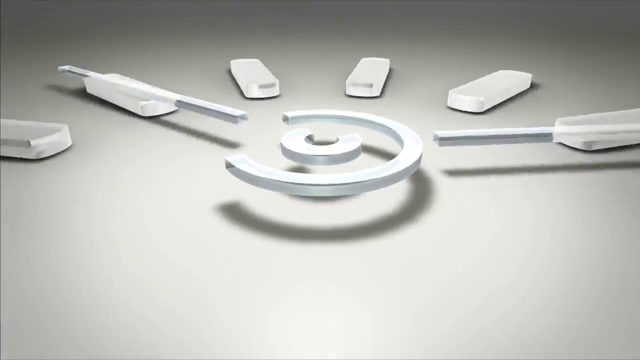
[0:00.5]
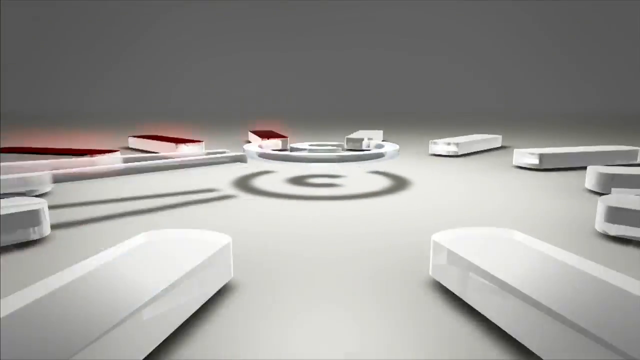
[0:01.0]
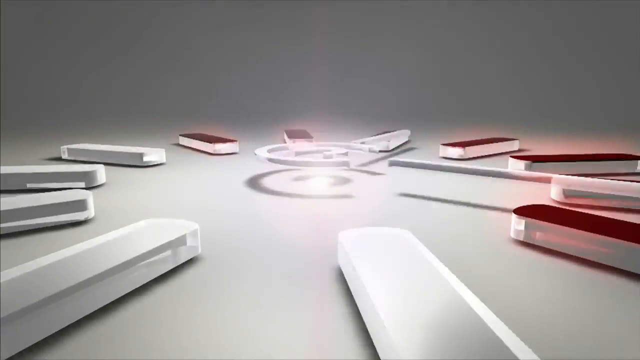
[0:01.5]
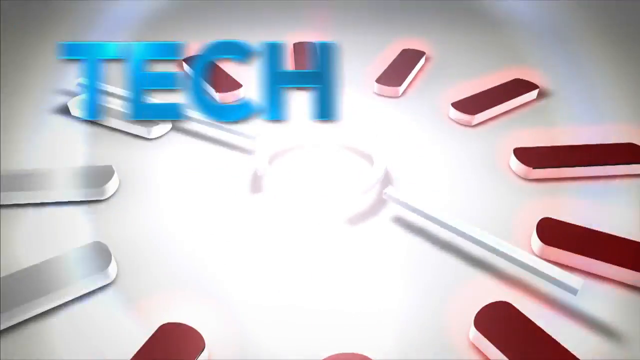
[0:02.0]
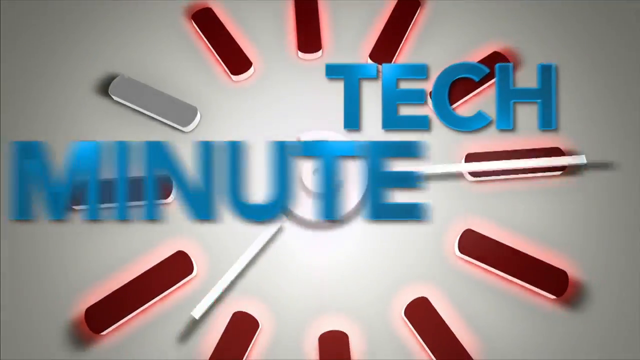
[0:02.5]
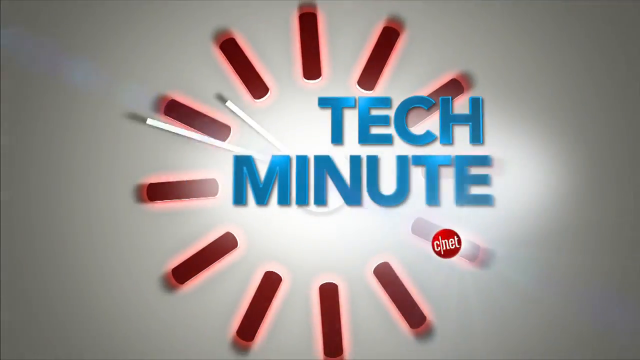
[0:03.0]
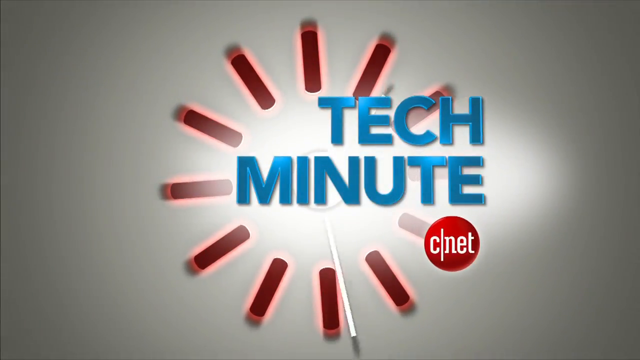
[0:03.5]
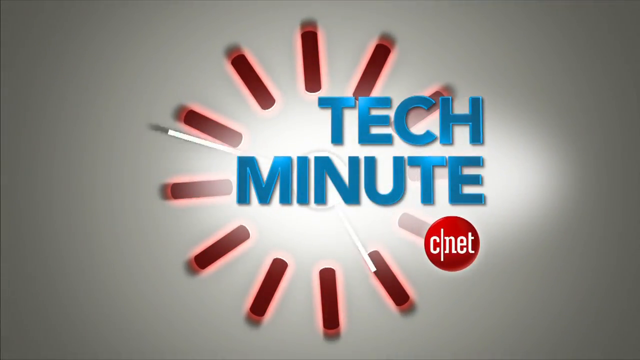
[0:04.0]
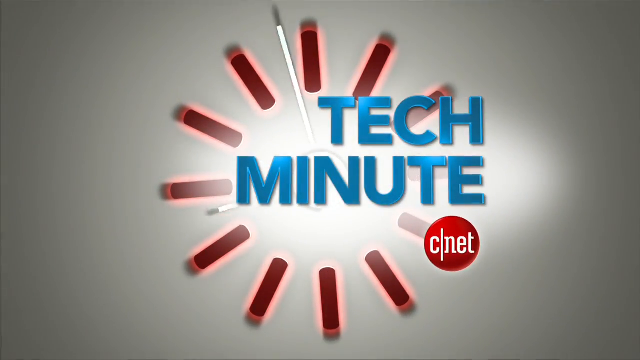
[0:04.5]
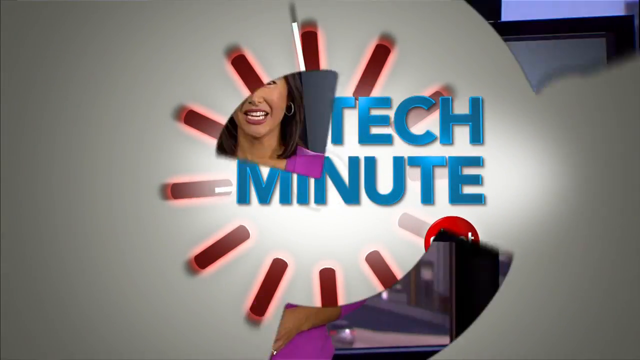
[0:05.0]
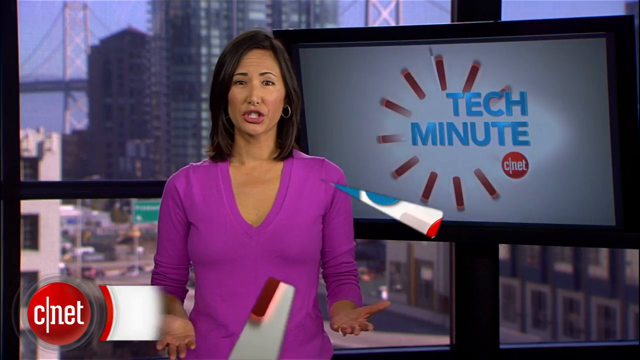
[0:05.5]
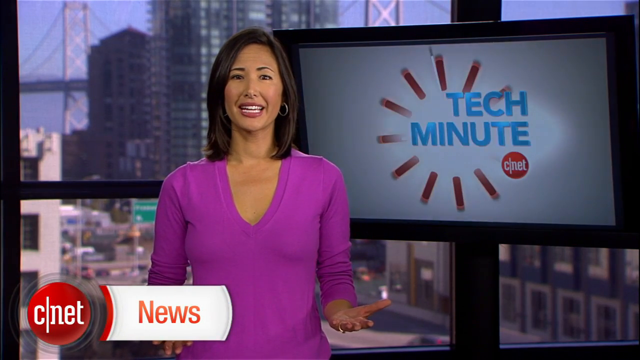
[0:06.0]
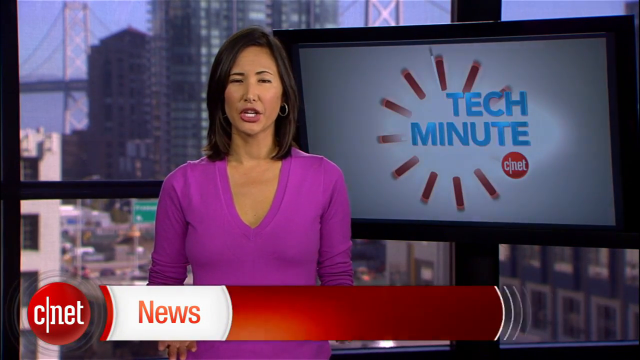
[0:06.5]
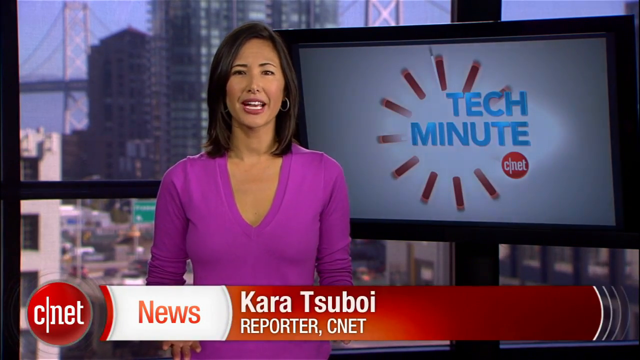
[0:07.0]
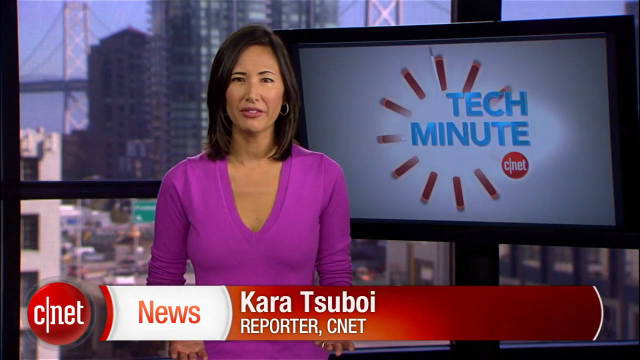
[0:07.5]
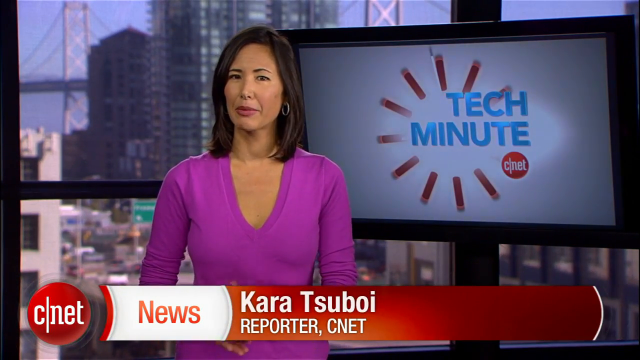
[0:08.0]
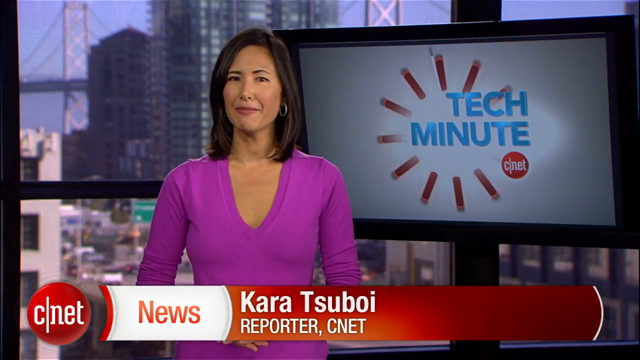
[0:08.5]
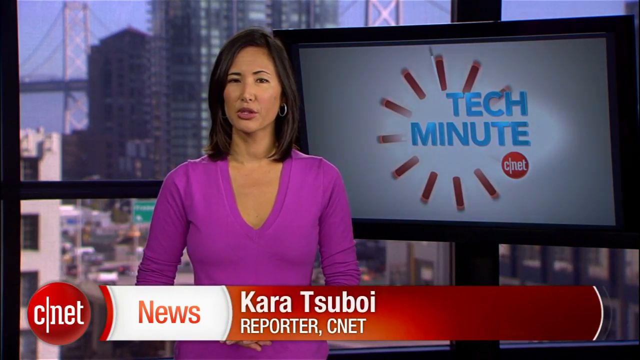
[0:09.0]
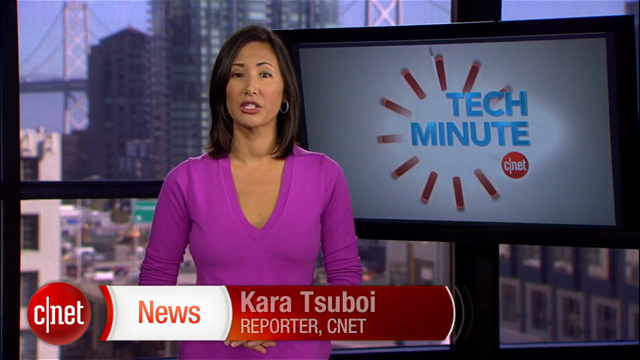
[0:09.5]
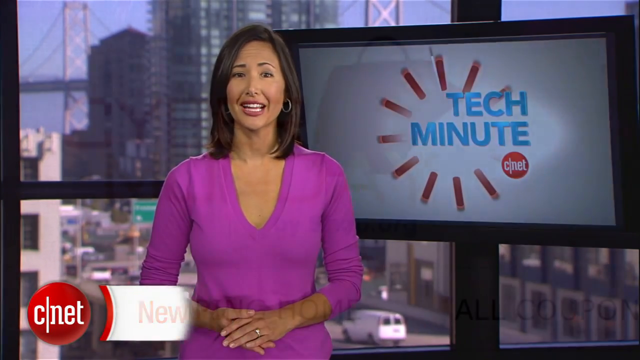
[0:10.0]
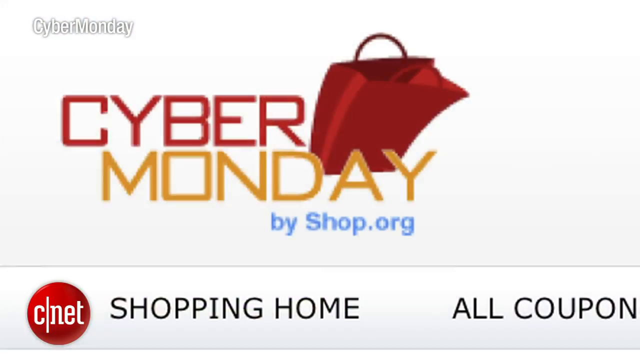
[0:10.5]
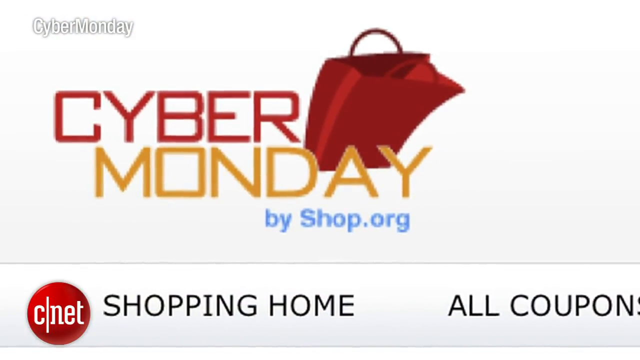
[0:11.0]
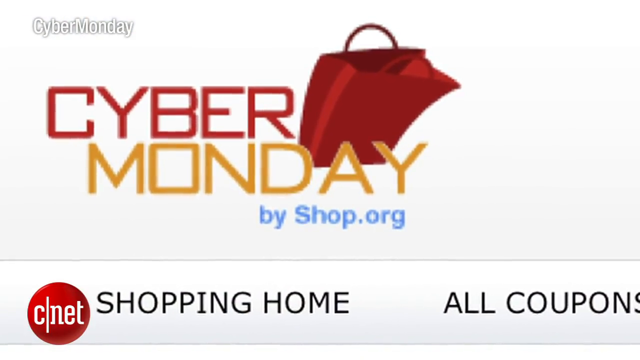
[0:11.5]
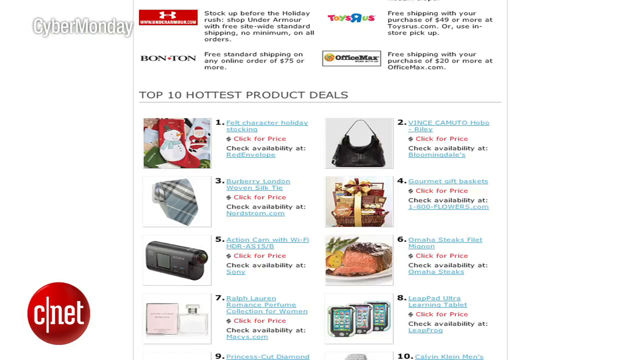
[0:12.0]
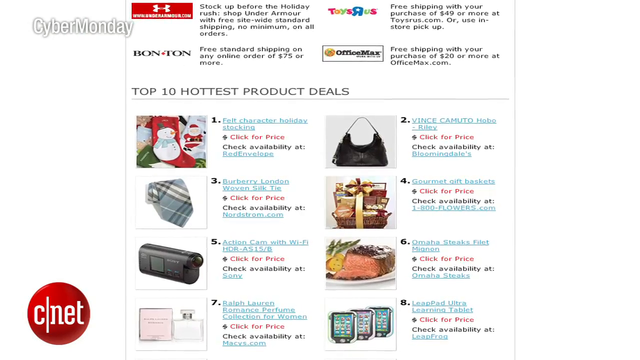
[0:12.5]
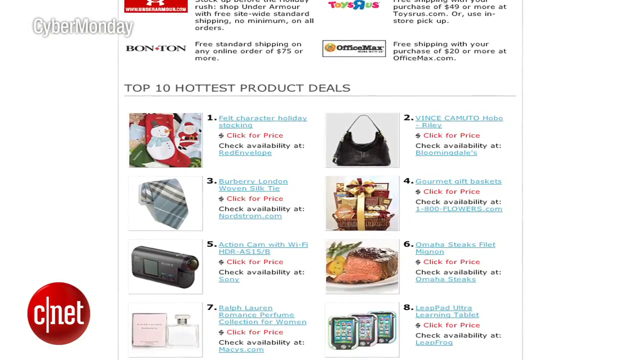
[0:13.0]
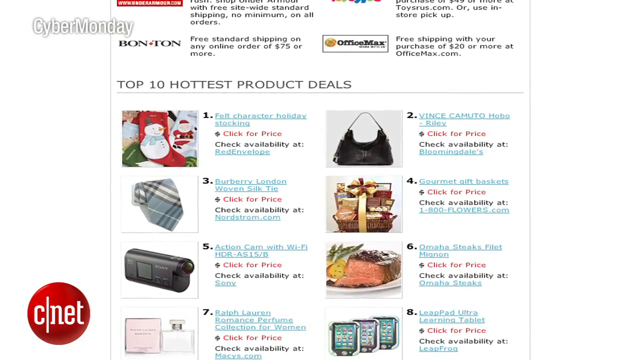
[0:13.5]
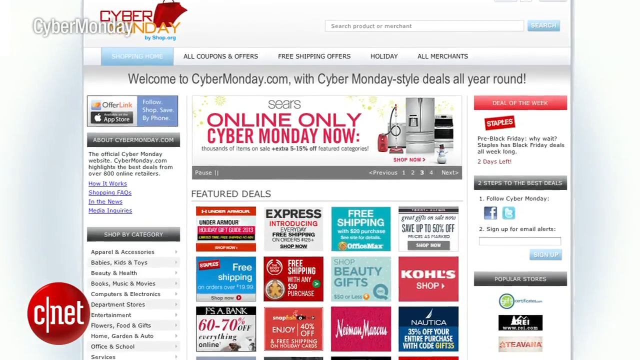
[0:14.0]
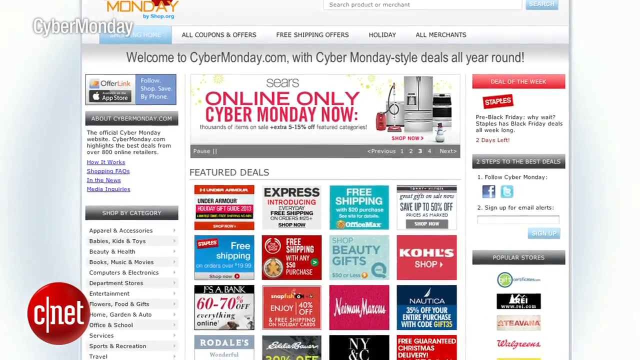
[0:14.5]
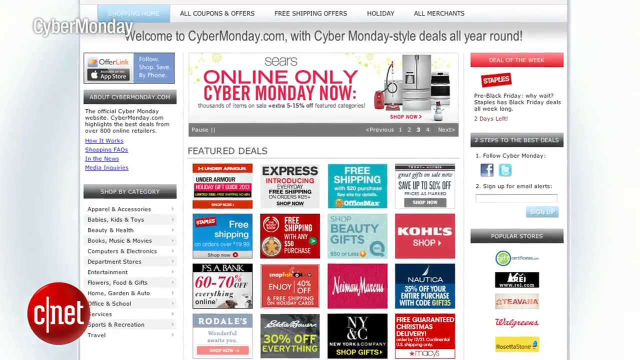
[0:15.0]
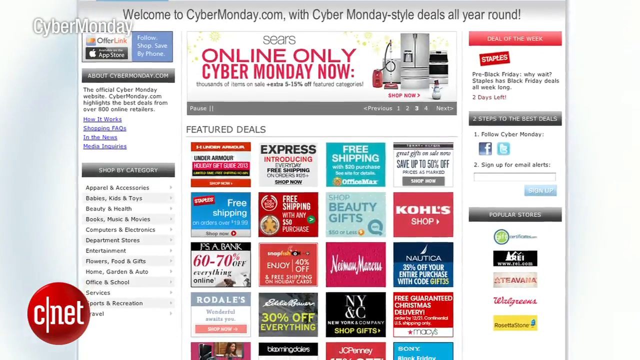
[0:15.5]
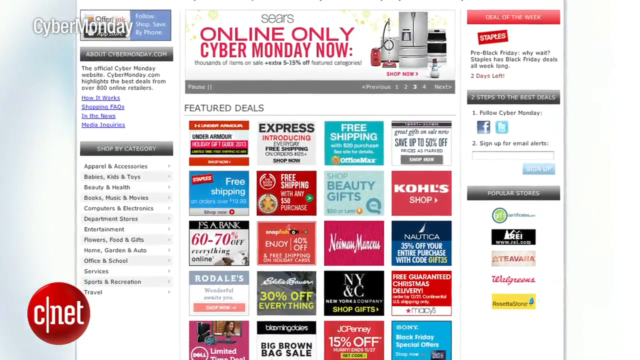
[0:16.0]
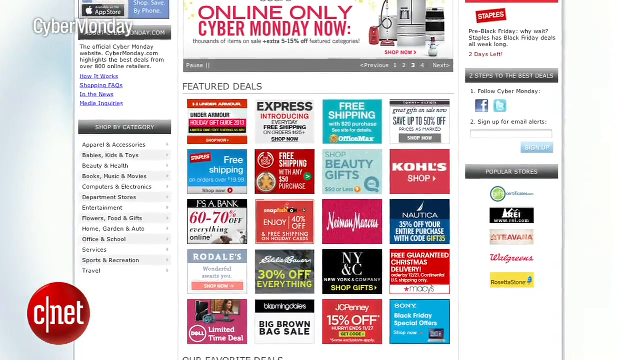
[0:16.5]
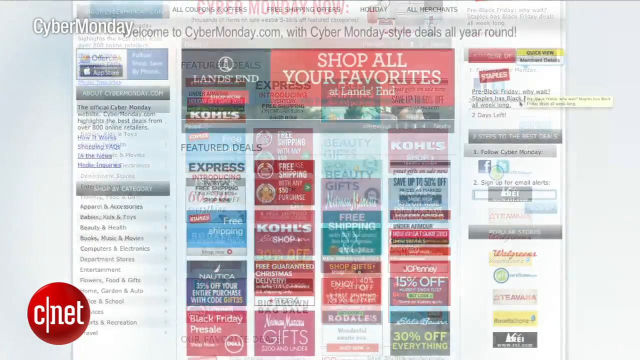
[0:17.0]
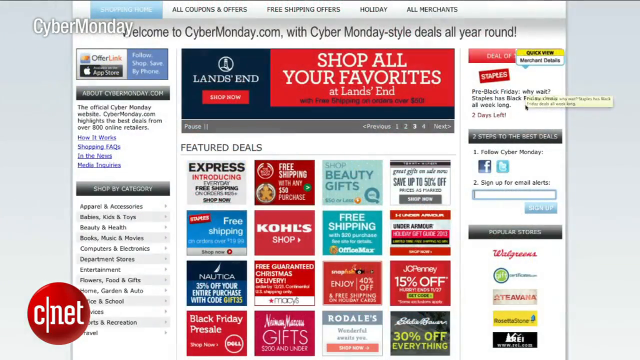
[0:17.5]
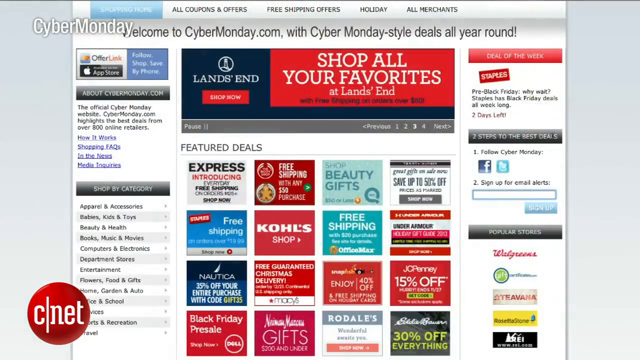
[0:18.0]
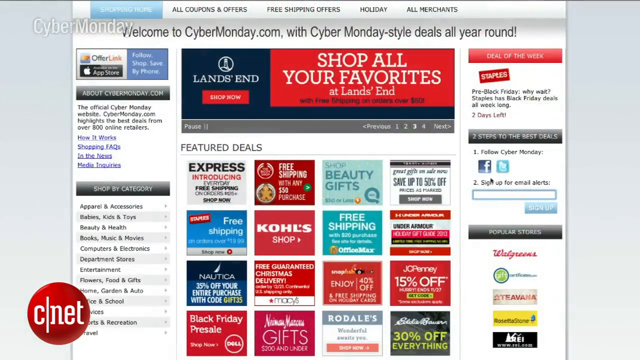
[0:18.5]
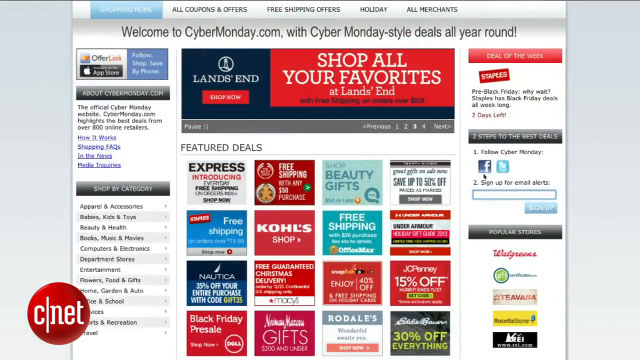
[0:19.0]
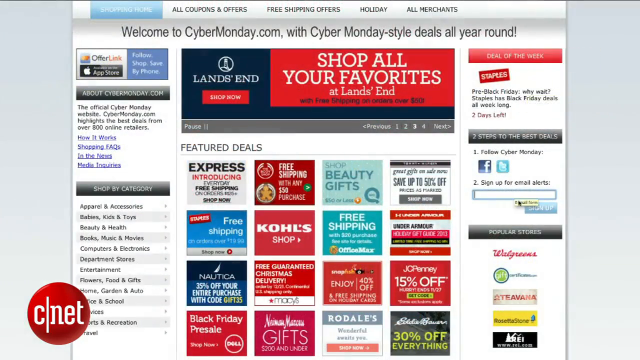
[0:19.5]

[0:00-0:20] A spinning clock appears with the text "Tech Minute by CNET." Kaira Suboy, a reporter for CNET, presents a report on Cyber Monday shopping, showing shopping pages from Land's End as examples, with lots of products to choose from. She looks very professional as she speaks and seems to be in a newsroom.